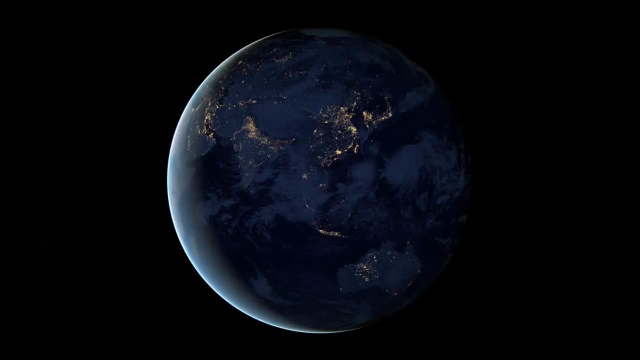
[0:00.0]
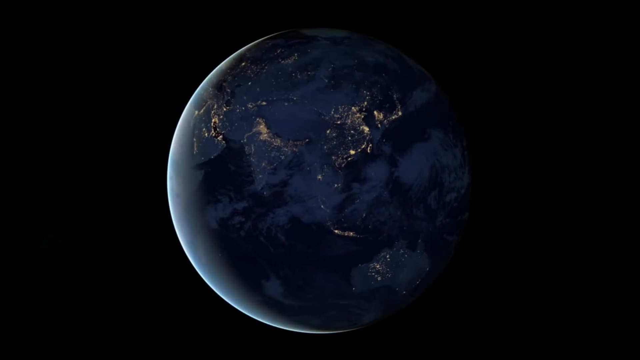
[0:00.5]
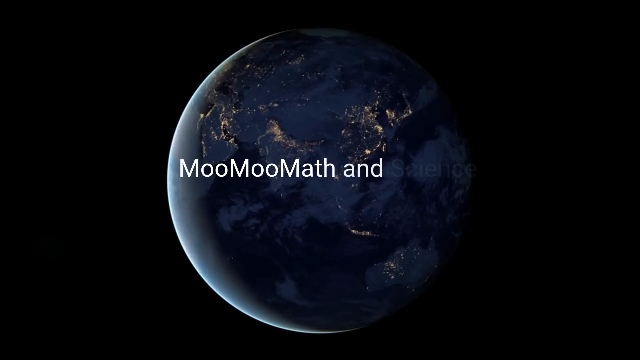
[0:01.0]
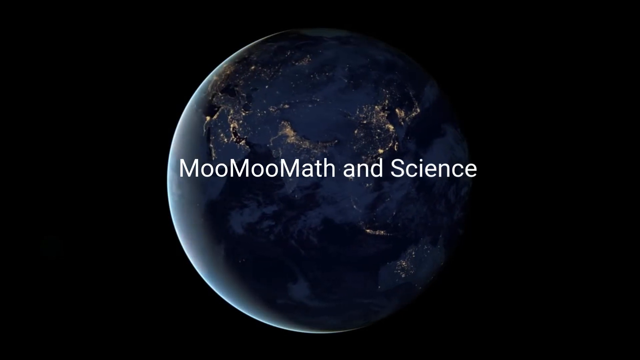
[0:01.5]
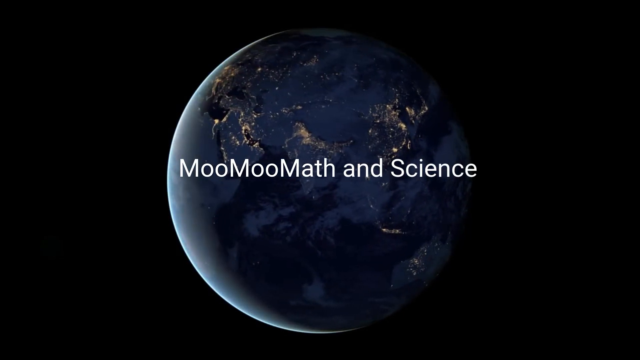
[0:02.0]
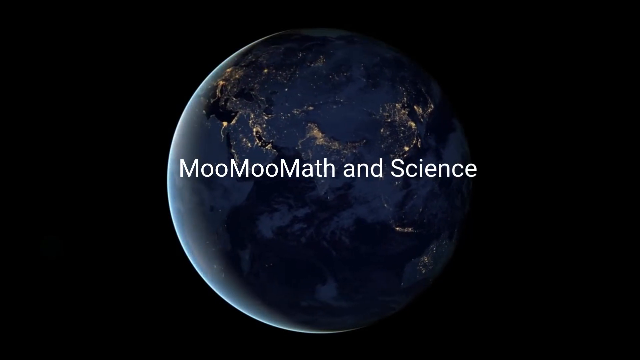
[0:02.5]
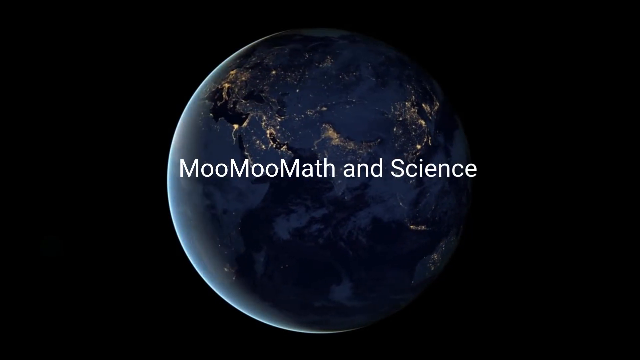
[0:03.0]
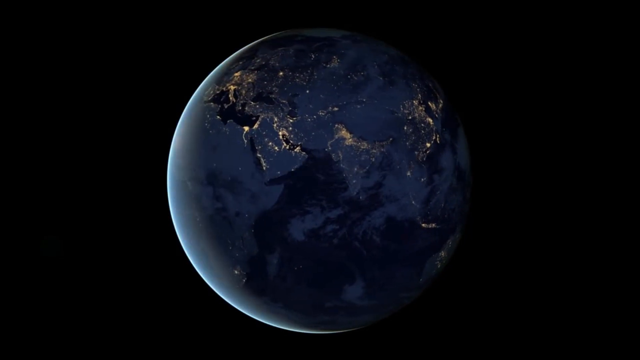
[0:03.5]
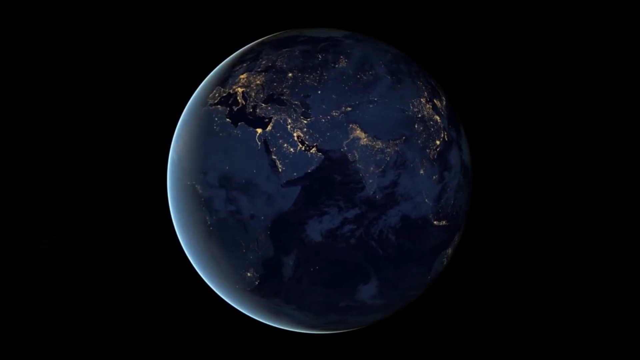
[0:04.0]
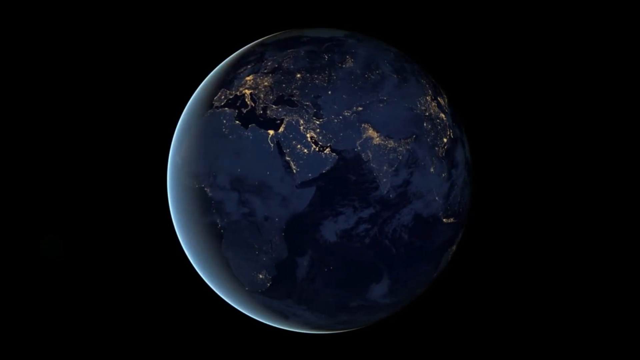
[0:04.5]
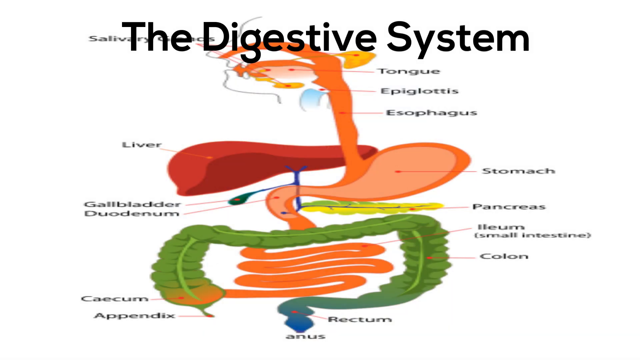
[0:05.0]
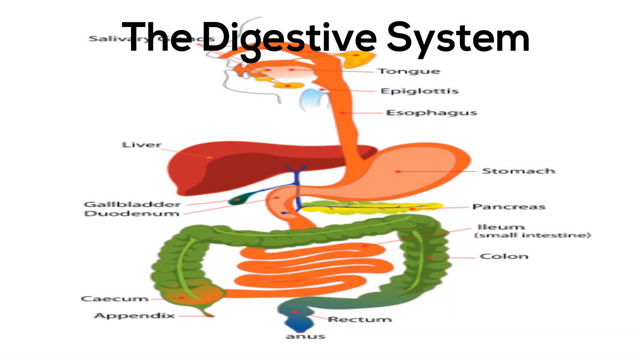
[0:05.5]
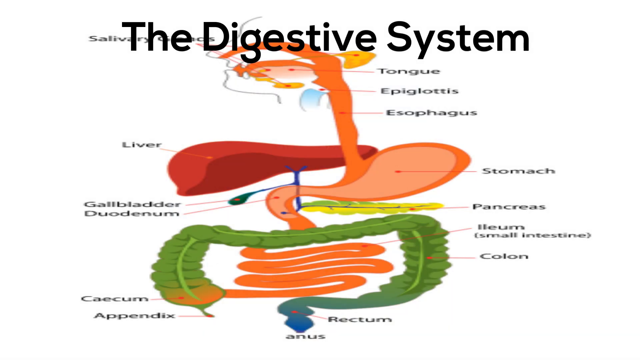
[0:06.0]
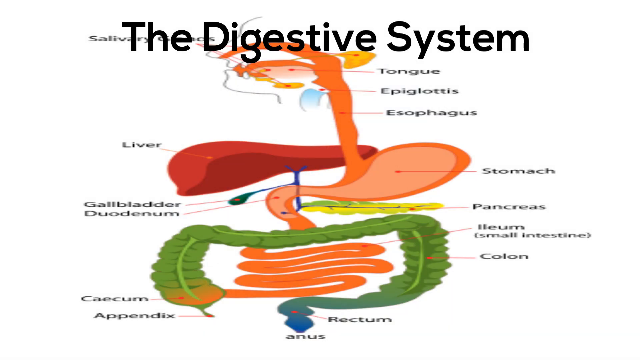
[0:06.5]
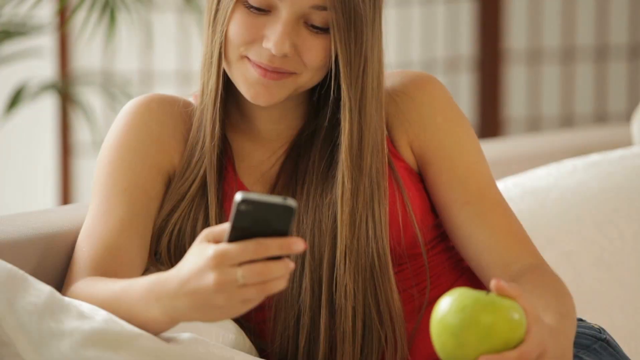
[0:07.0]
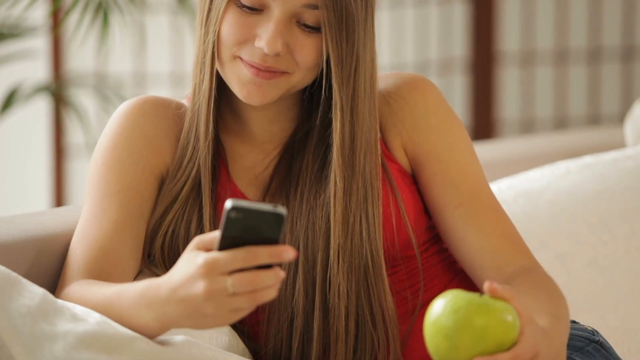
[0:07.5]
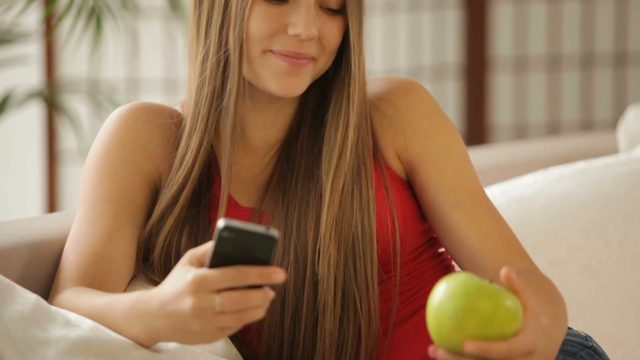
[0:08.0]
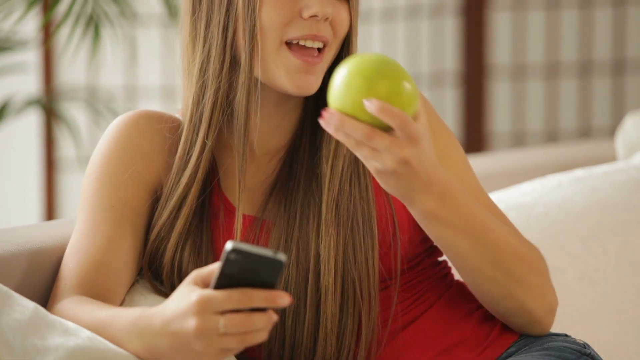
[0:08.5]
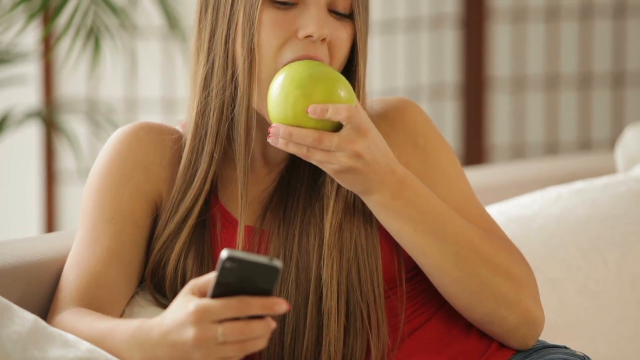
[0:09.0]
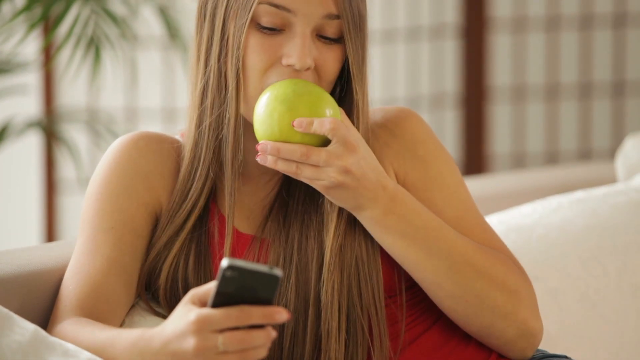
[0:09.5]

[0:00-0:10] The planet Earth rotates slowly counterclockwise, surrounded by darkness, so the background is an intense black. In the first seconds, white text in a not-too-large font appears in the center of the frame. The text disappears after a few moments with a dissolve, and an image of a digestive system is shown. The image is colorful, and the internal organs in it are in different colors from each other. There is black text at the top of the image. Then a video shows a girl wearing a red shirt bringing a yellow apple close to her mouth to bite it. She has brown, quite long hair, and while she bites the apple she looks at the cell phone in her right hand. She is sitting on a white sofa. Behind her, on the left side of the frame, a plant is visible.